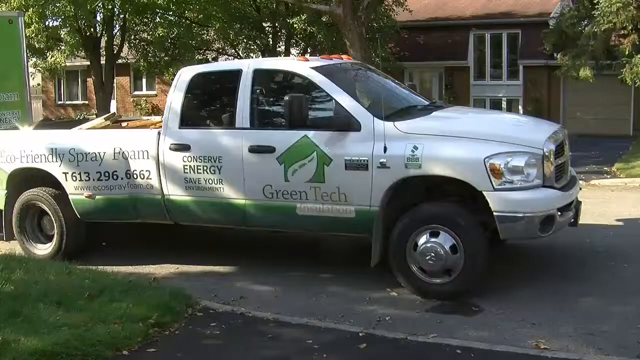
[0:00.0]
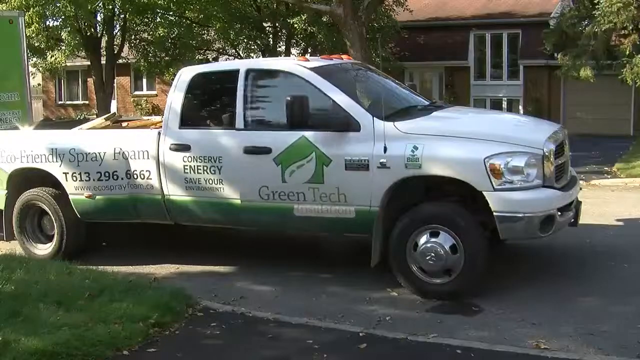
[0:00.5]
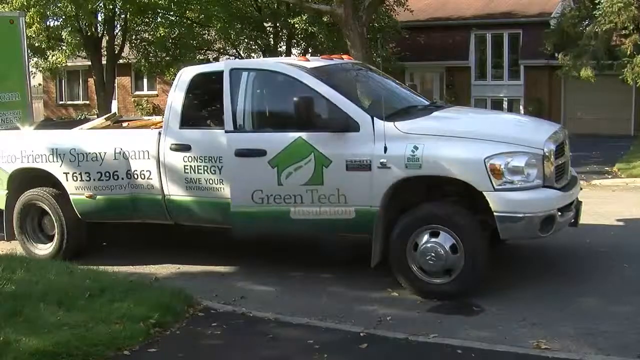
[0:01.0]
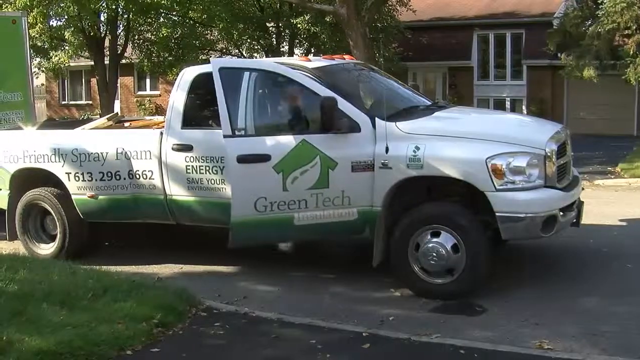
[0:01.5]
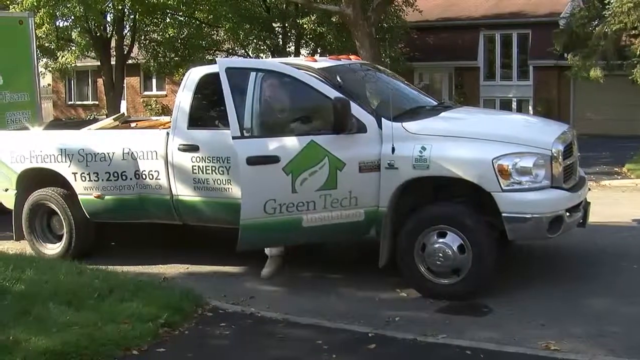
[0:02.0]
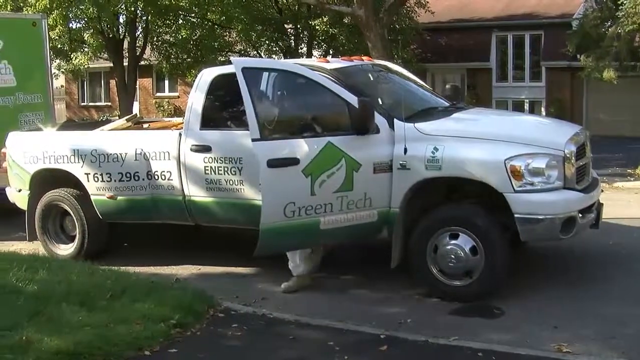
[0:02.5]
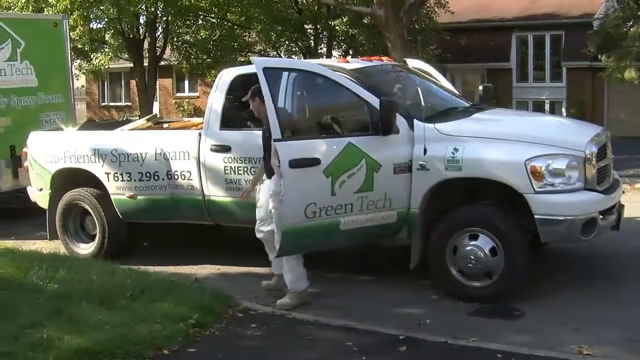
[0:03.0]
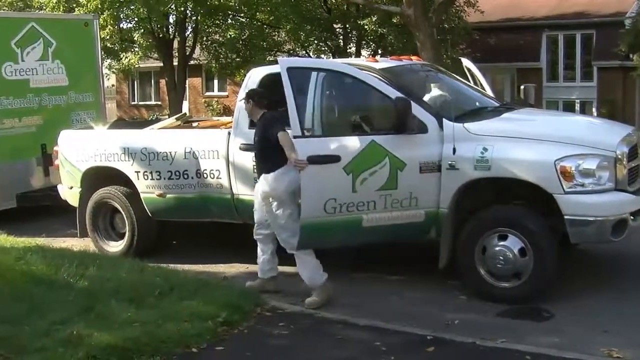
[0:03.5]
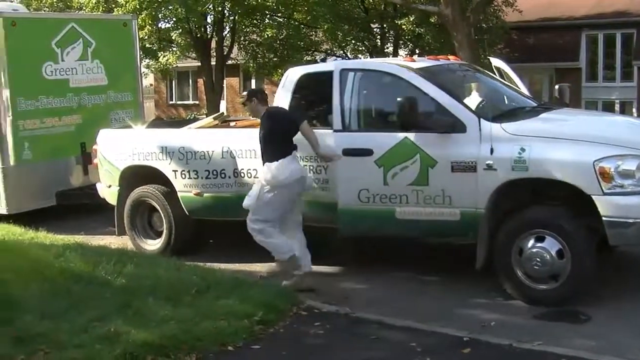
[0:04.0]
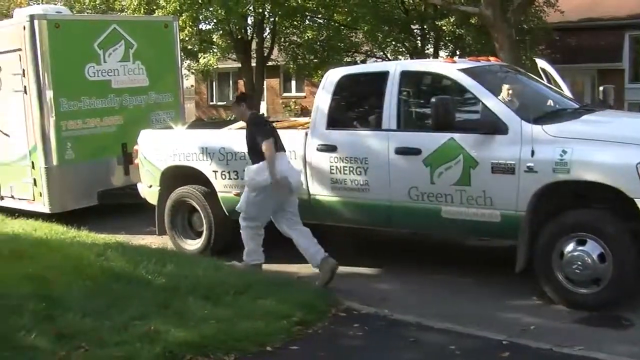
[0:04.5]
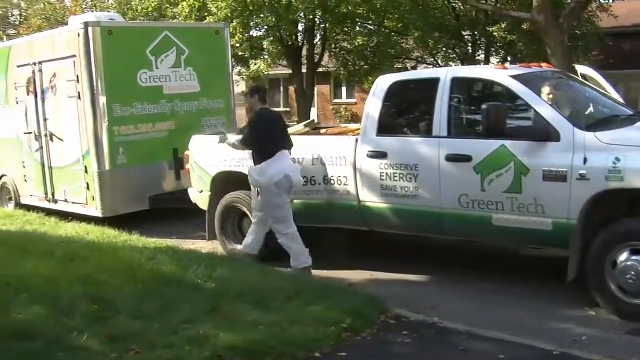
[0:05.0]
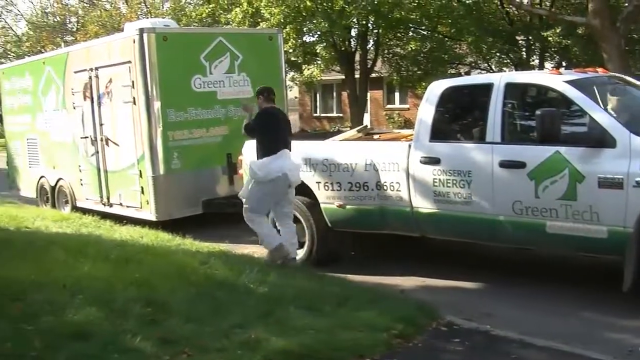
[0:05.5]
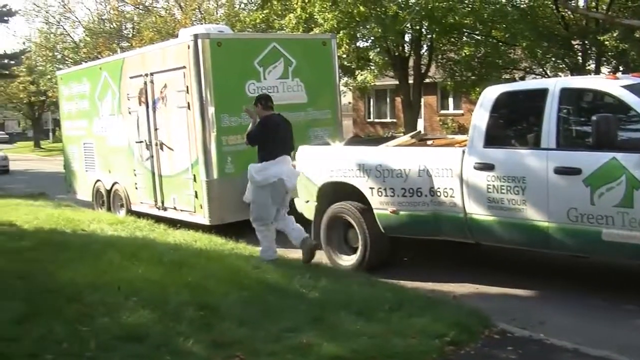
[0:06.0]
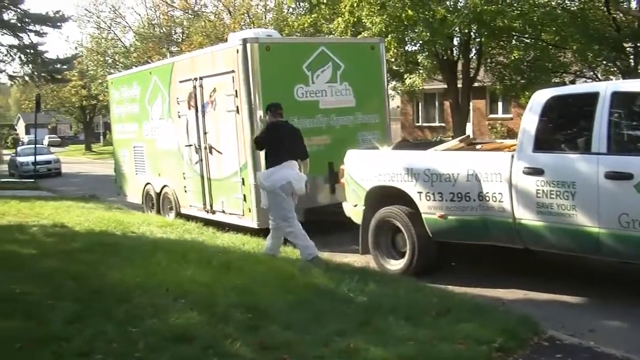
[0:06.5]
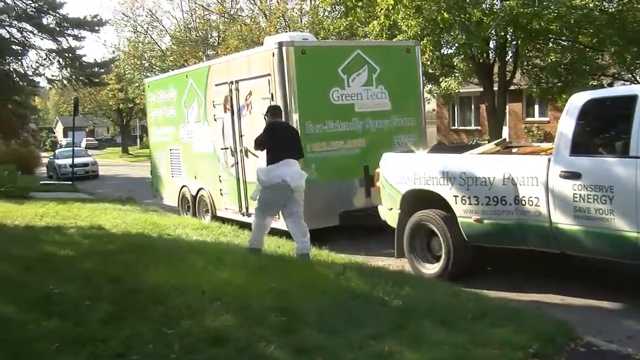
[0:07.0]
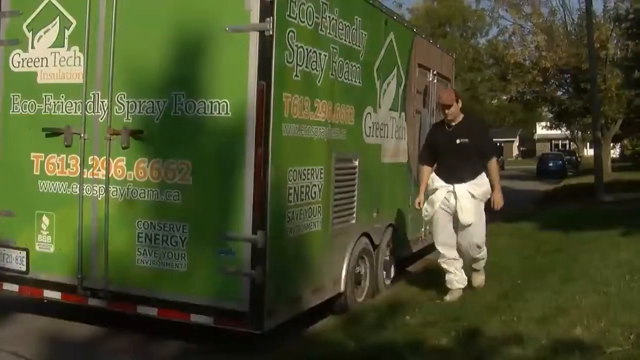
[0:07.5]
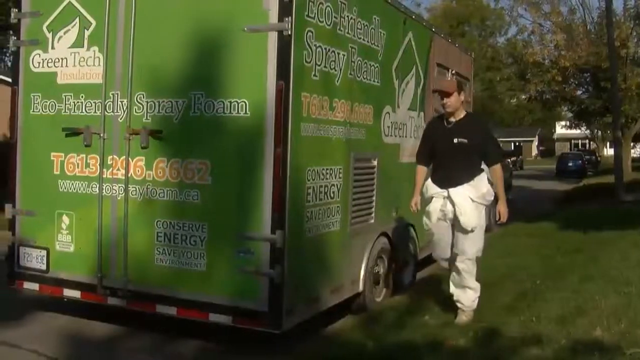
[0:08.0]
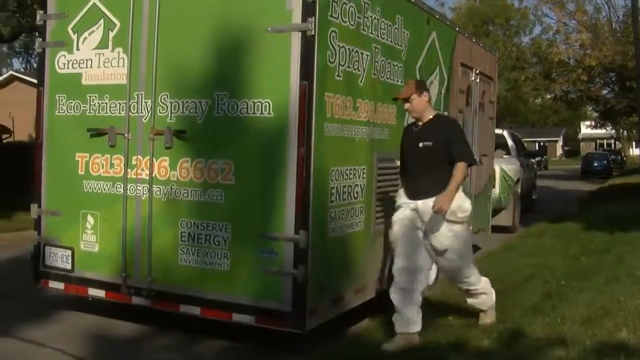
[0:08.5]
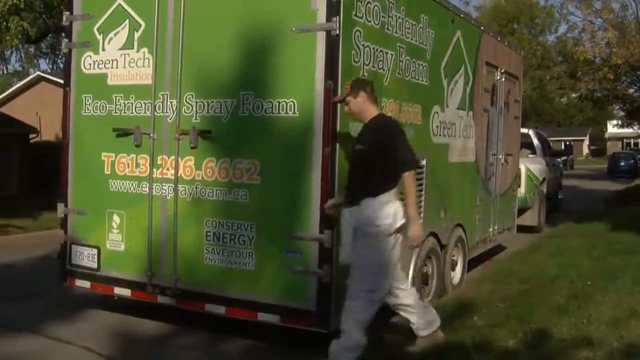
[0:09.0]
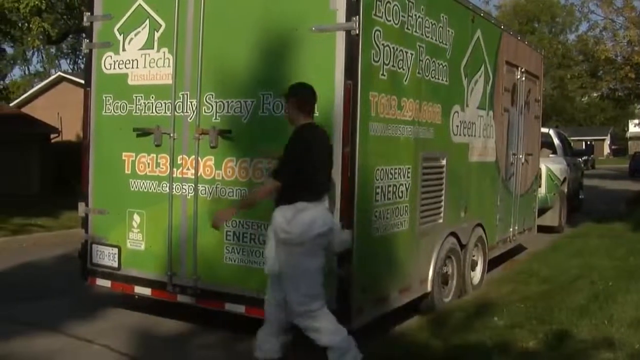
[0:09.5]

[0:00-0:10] A white truck with a green bottom is marked "green tech installations eco-friendly spray foam conserve energy and save your environment." A green trailer is attached to it, carrying the same kind of text: "green tech," "conserve energy," "eco-friendly spray foam." The truck is parked on the road at the curb next to a house, or between a couple of houses, in a residential neighborhood with houses, grass and a road. A man in a white jumpsuit with a dark t-shirt and boots gets out in his work clothes, walks back to the trailer and opens it.